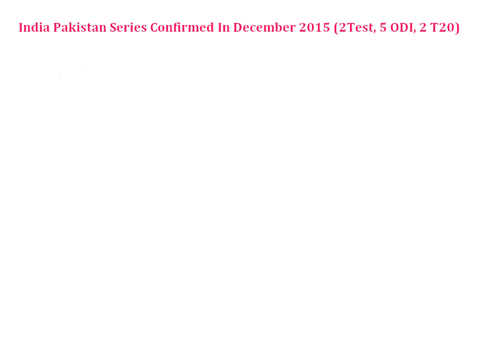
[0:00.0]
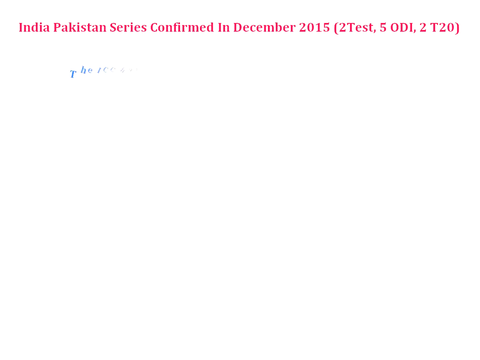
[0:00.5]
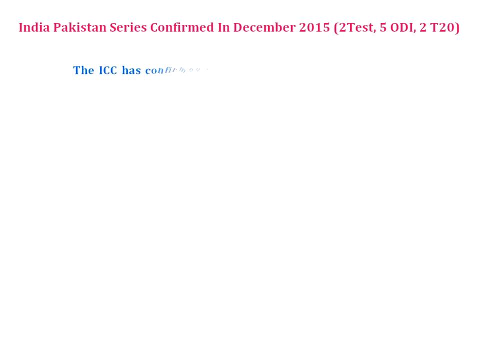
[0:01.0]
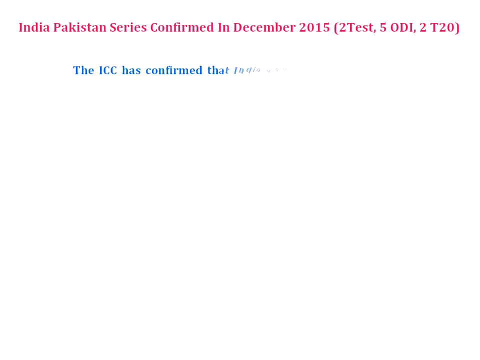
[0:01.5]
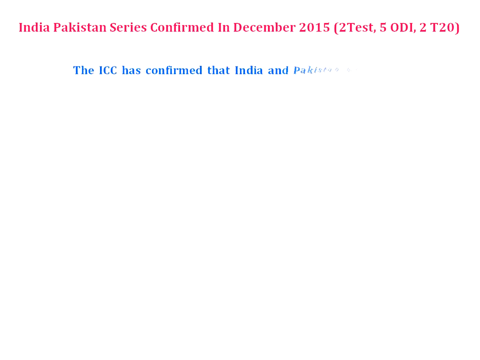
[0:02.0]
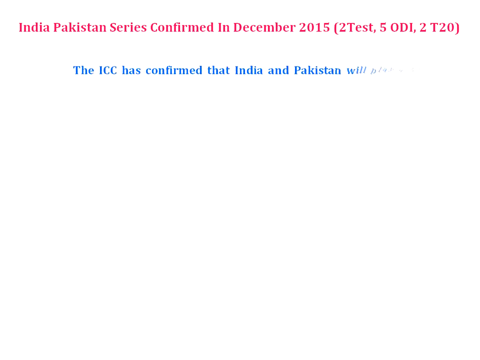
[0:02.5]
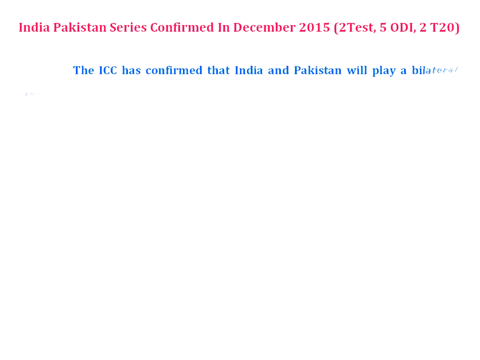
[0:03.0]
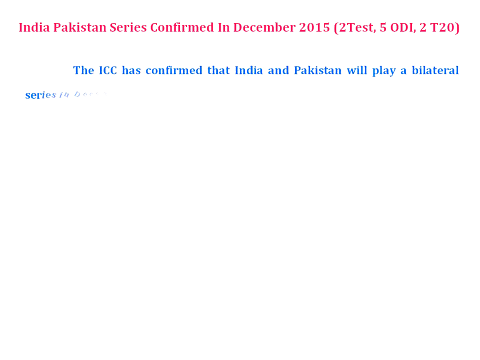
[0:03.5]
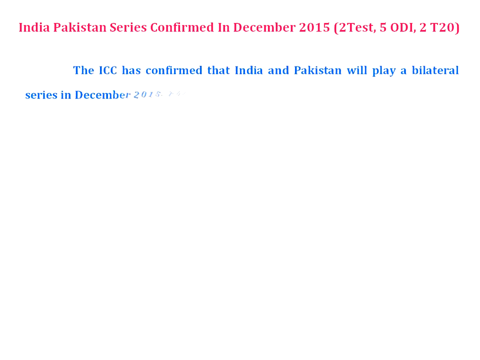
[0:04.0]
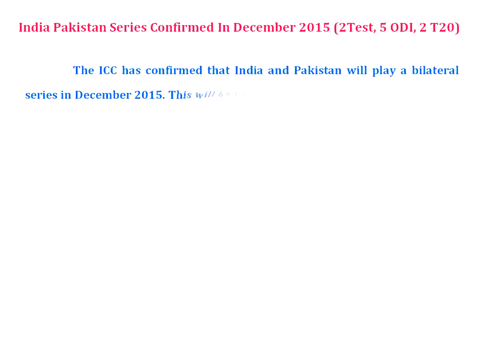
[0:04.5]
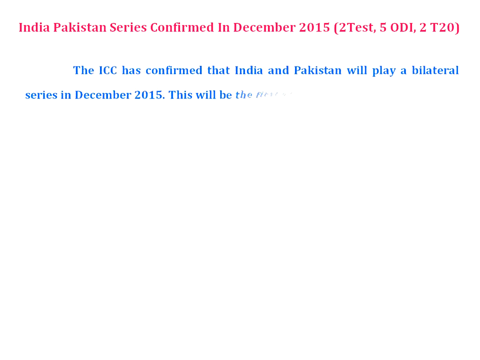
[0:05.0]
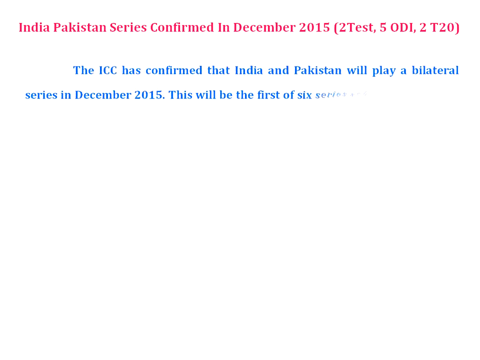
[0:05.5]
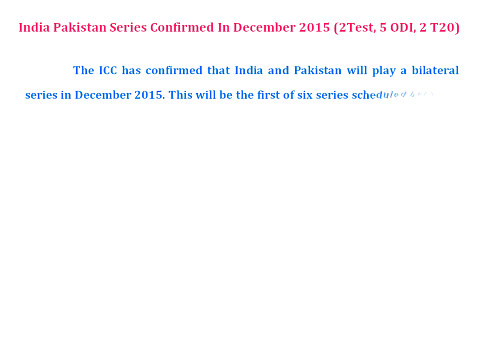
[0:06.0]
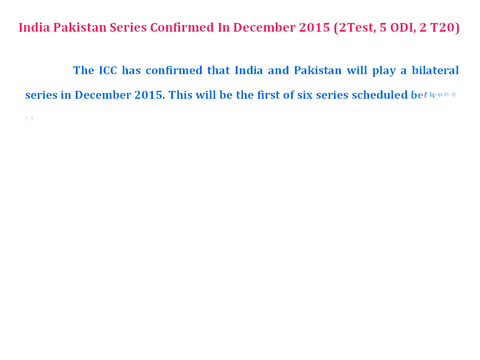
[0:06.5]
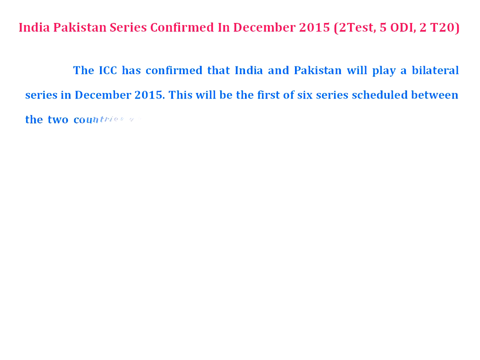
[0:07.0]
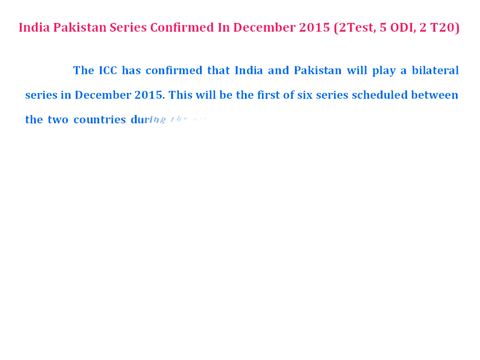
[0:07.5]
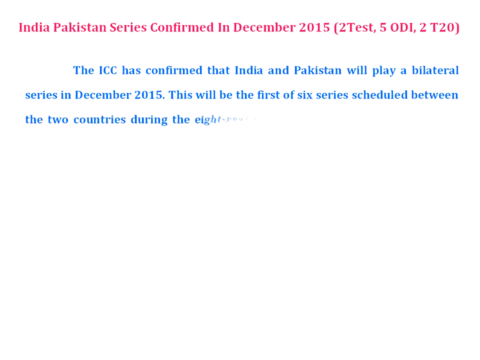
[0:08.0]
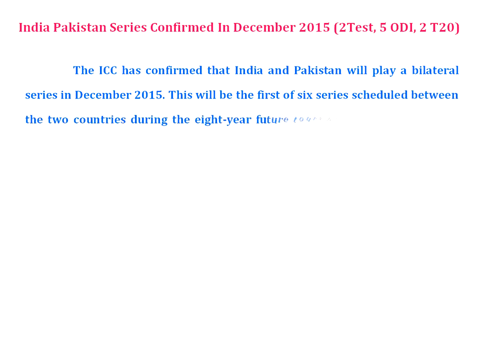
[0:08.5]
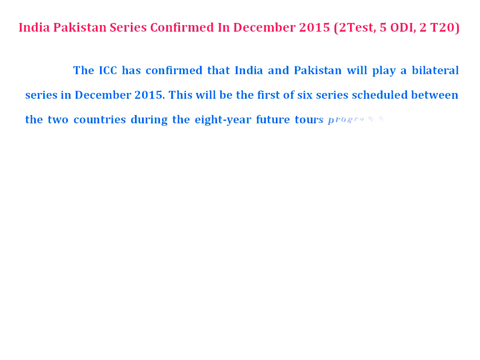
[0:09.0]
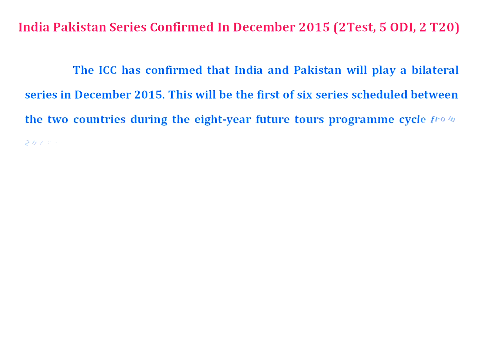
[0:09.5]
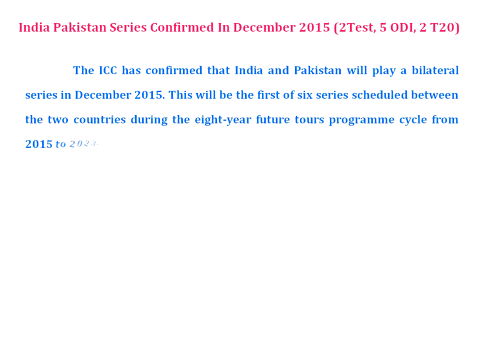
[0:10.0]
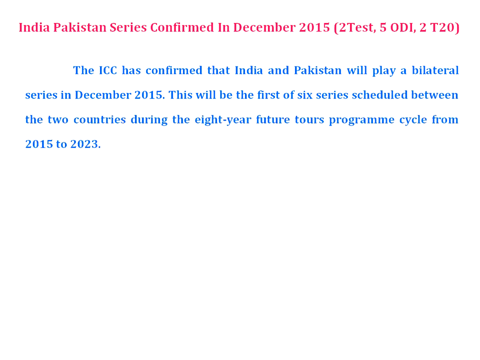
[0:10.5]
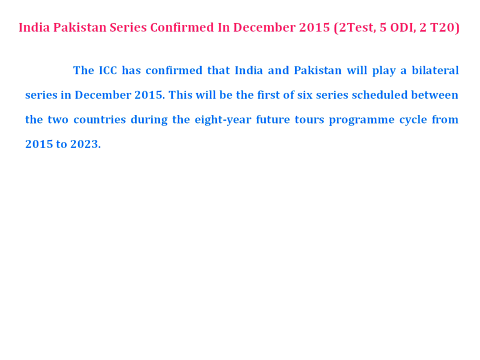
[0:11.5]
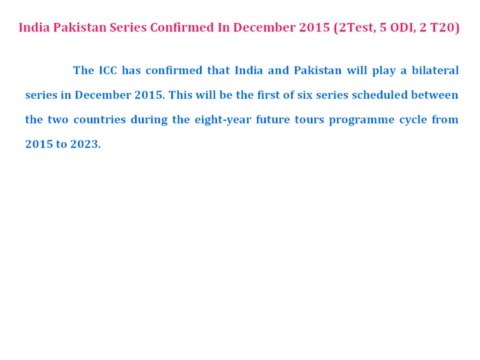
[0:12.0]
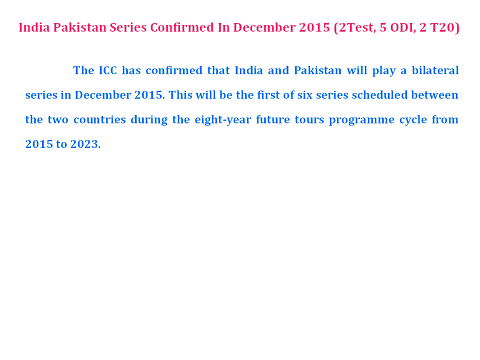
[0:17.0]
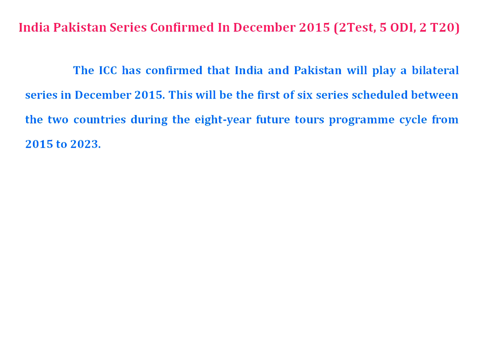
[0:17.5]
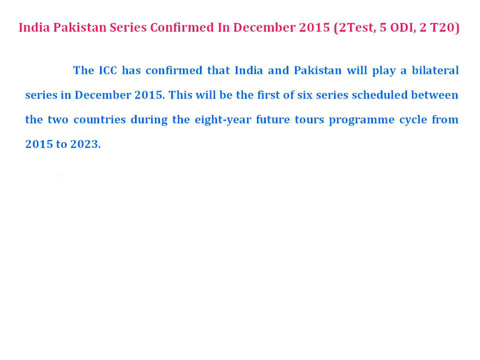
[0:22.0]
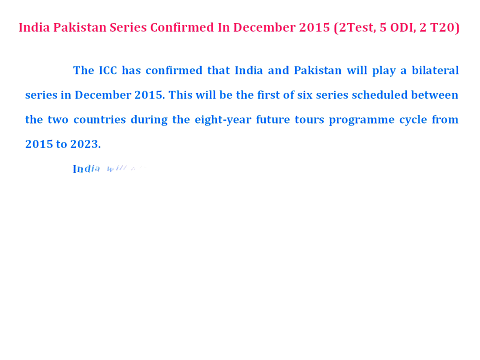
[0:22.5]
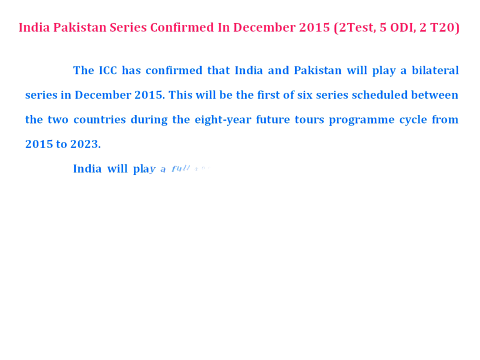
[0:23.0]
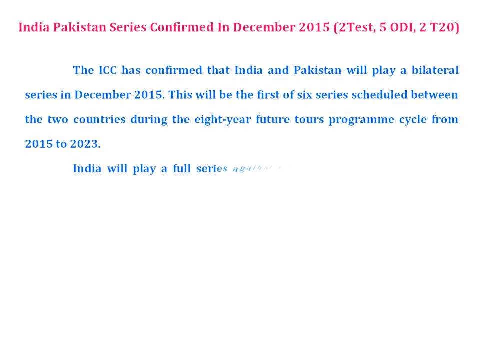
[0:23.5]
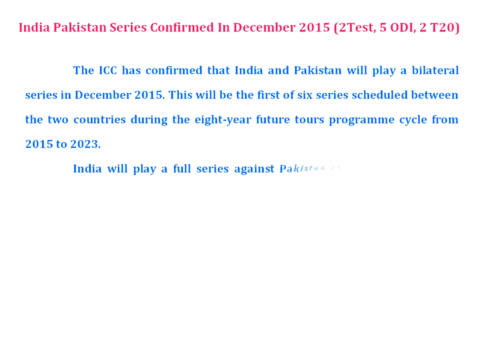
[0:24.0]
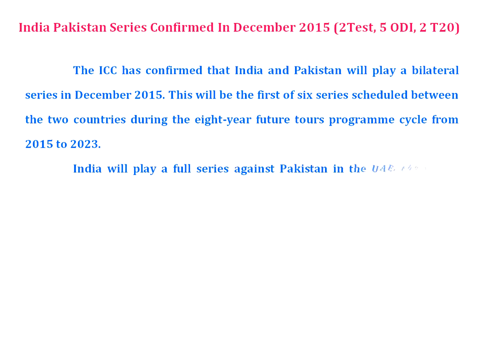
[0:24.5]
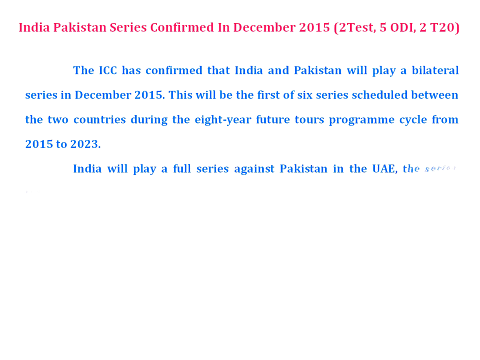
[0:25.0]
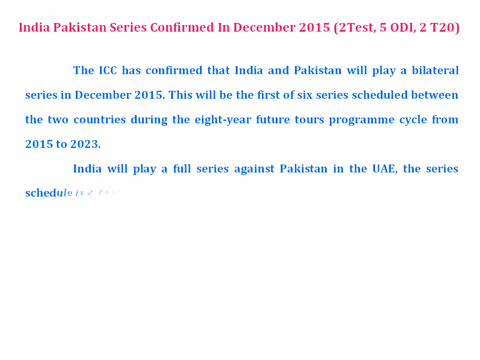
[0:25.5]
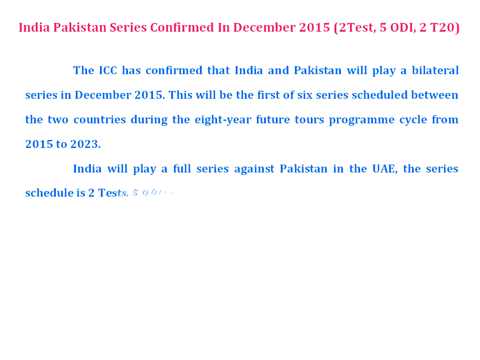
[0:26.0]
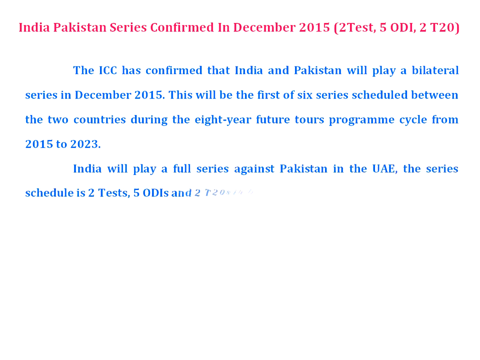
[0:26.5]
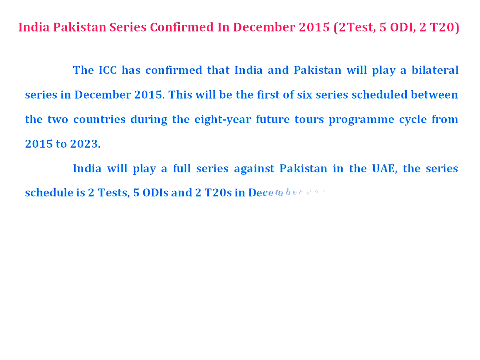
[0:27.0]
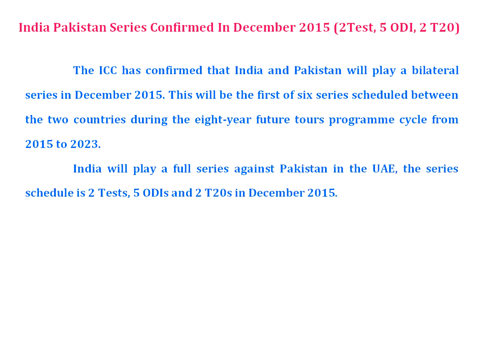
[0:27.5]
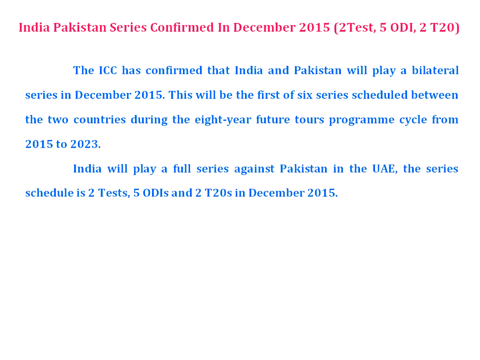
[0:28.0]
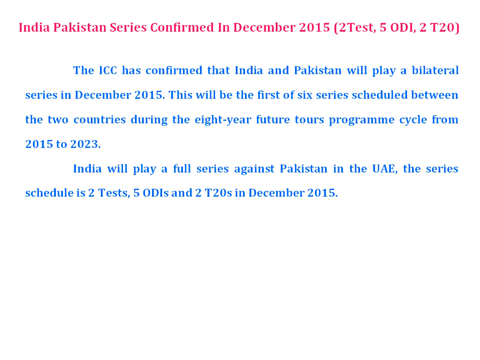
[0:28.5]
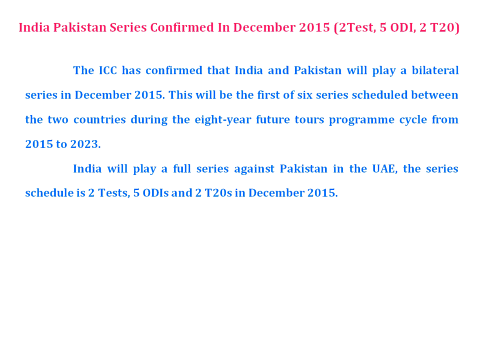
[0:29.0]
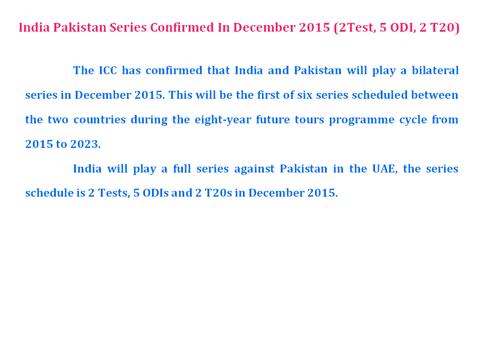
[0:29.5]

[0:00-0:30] The video opens on a white screen with pink words at the top, in a somewhat smaller font, reading "India Pakistan series confirmed in December 2015." Below that, slightly smaller blue lettering begins to appear with more details: "the ICC has confirmed that India and Pakistan will play a bilateral series in December 2015. This will be the first of six series scheduled between the two countries during the eight-year future tours program cycle from 2015 to 2023." Another paragraph in blue lettering then appears below the first, reading "India will play a full series against Pakistan in the UAE. The series schedule is two tests, five ODIs, and two T20s in December 2015." The blue lettering is slightly smaller than the pink title at the top but in the same style and font.